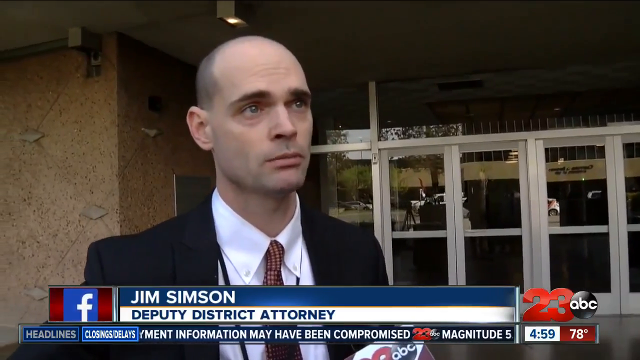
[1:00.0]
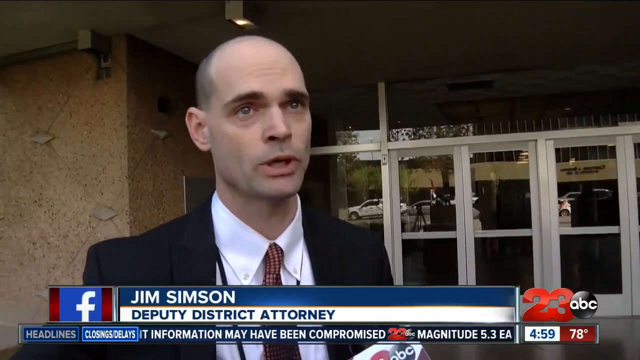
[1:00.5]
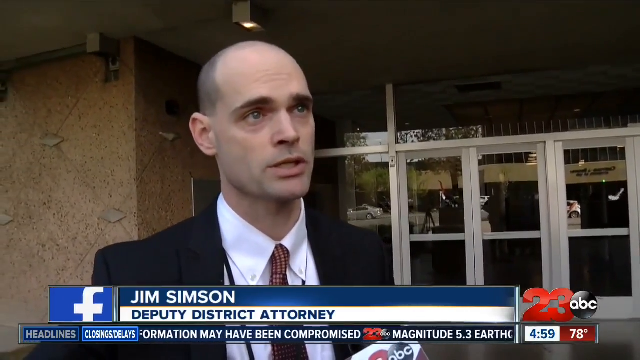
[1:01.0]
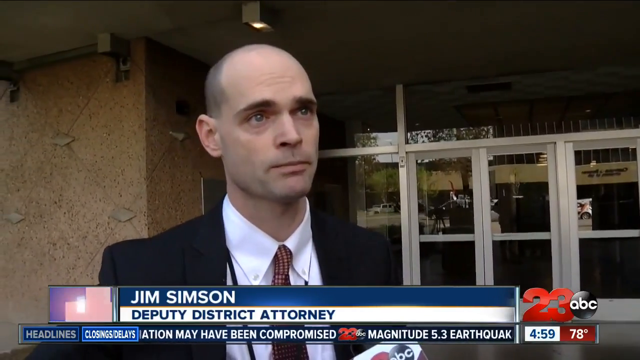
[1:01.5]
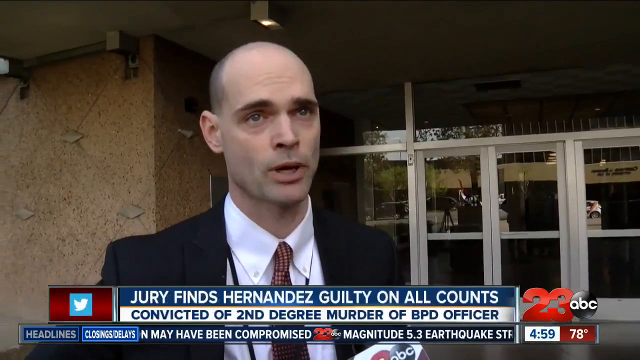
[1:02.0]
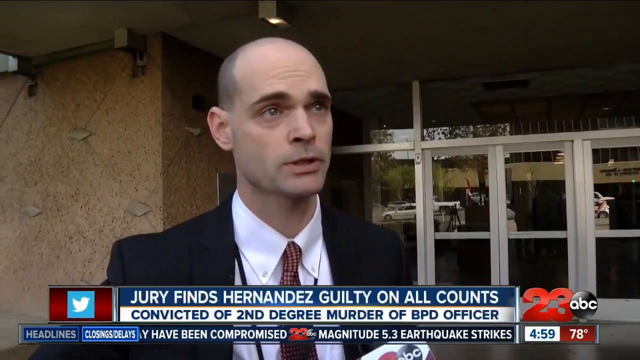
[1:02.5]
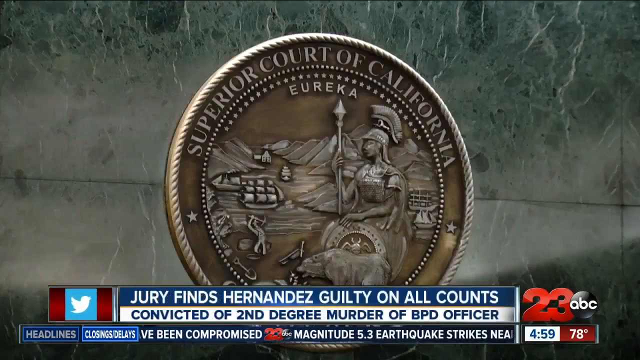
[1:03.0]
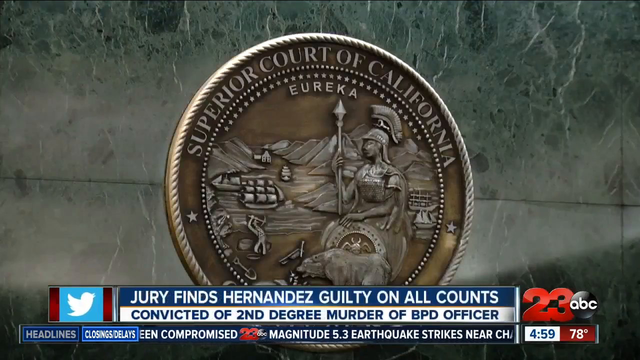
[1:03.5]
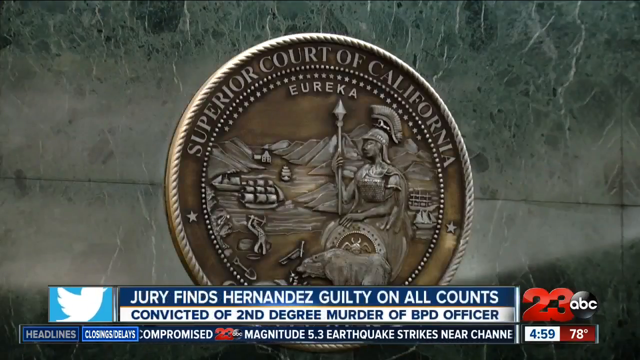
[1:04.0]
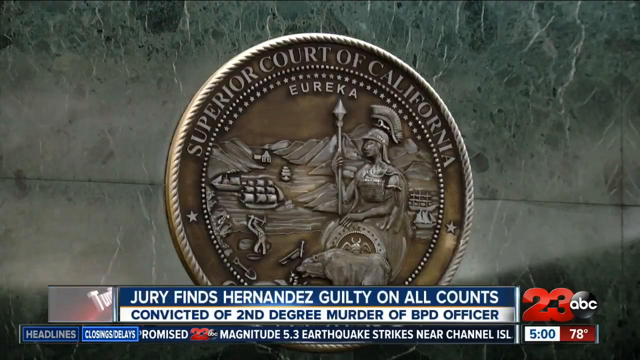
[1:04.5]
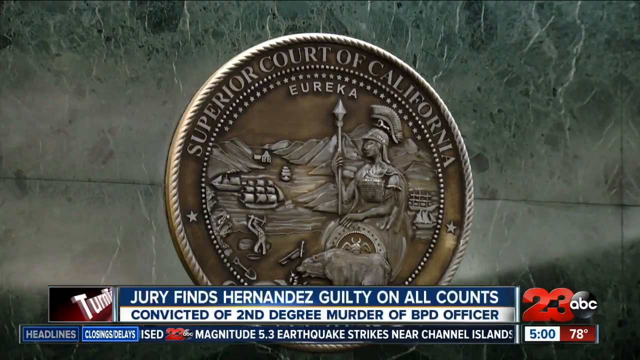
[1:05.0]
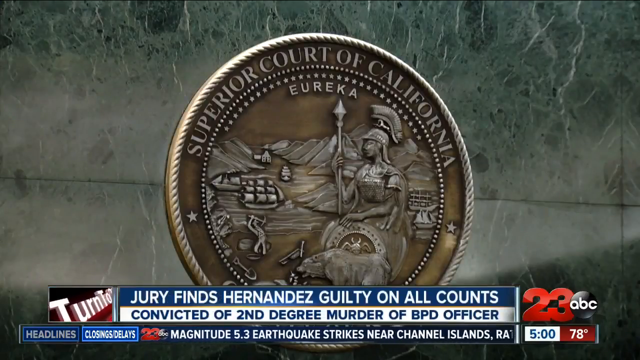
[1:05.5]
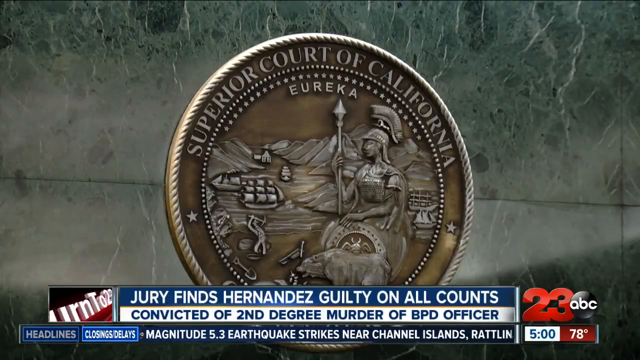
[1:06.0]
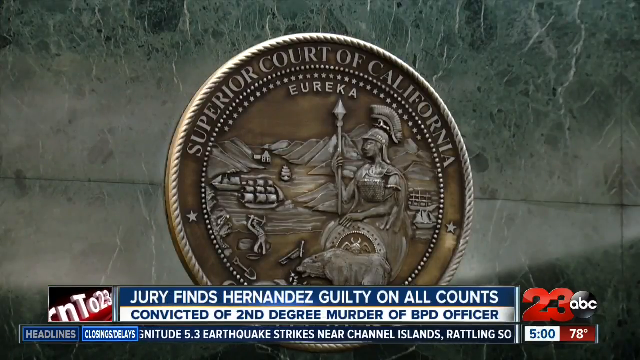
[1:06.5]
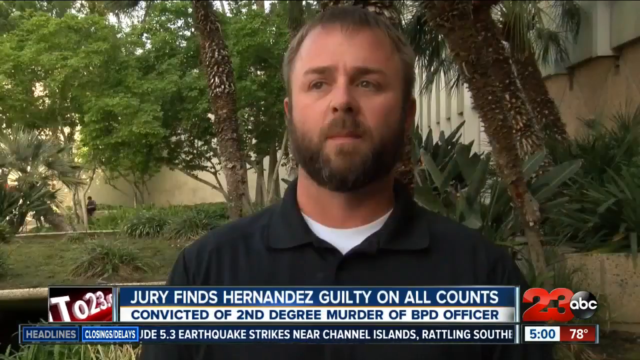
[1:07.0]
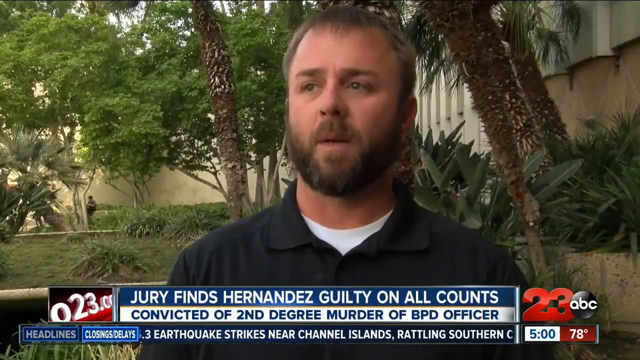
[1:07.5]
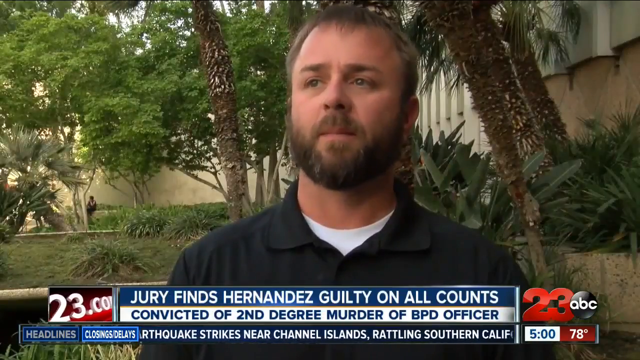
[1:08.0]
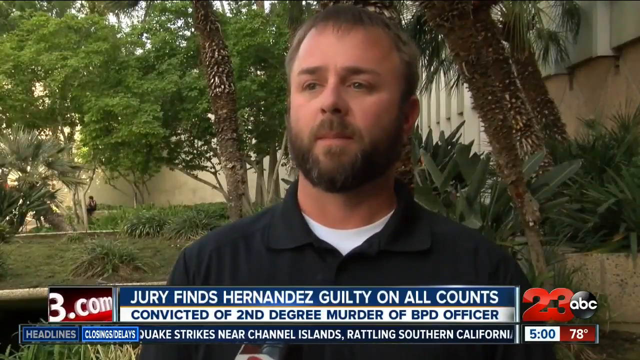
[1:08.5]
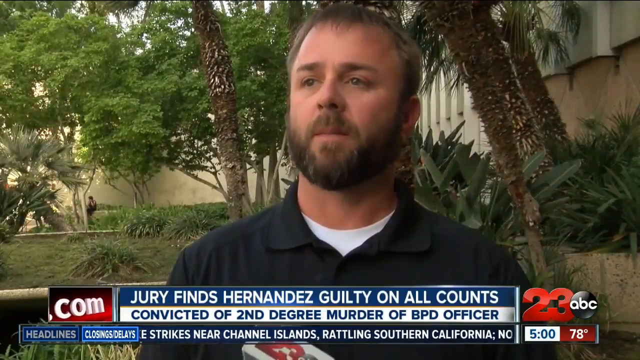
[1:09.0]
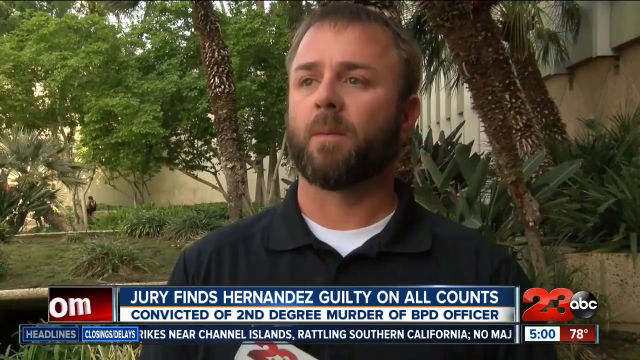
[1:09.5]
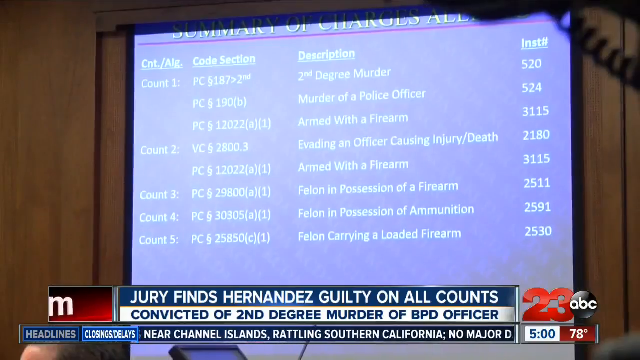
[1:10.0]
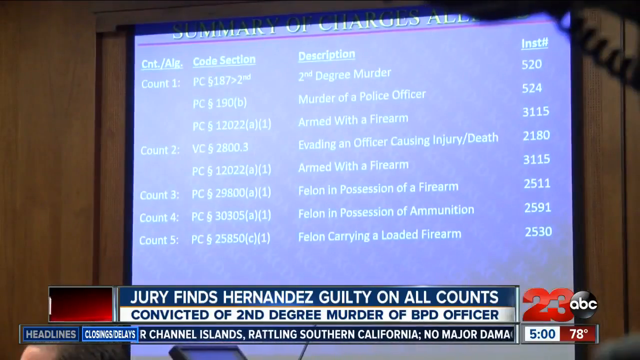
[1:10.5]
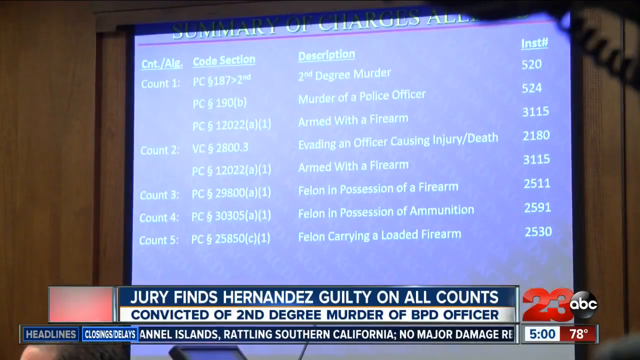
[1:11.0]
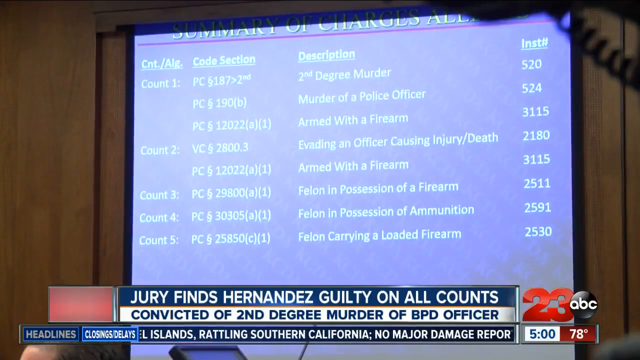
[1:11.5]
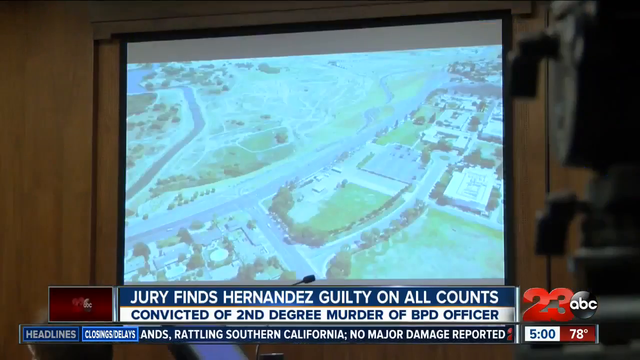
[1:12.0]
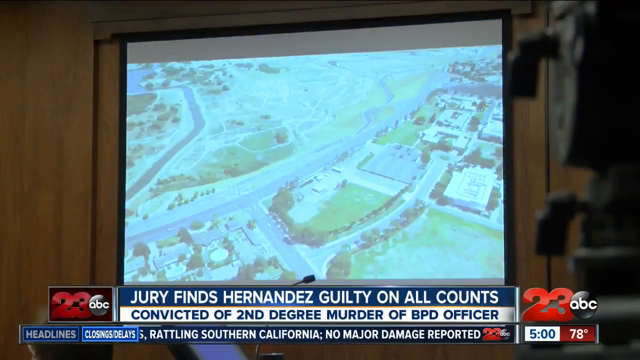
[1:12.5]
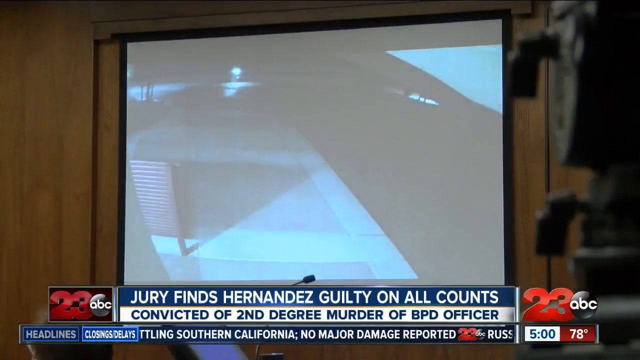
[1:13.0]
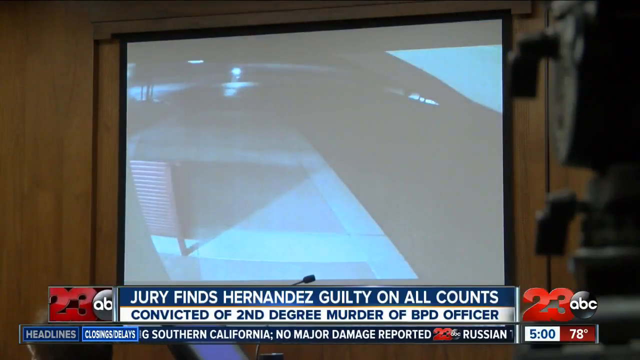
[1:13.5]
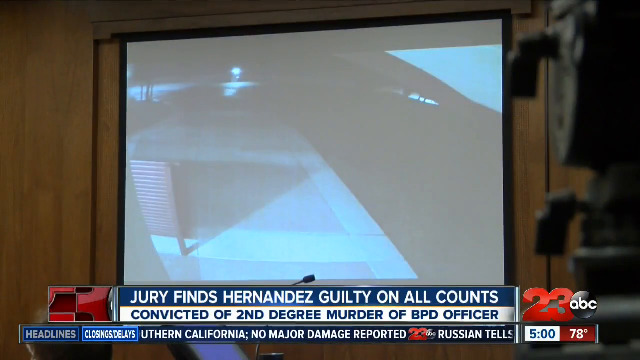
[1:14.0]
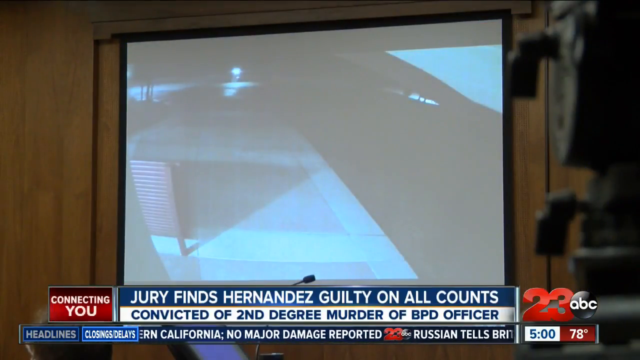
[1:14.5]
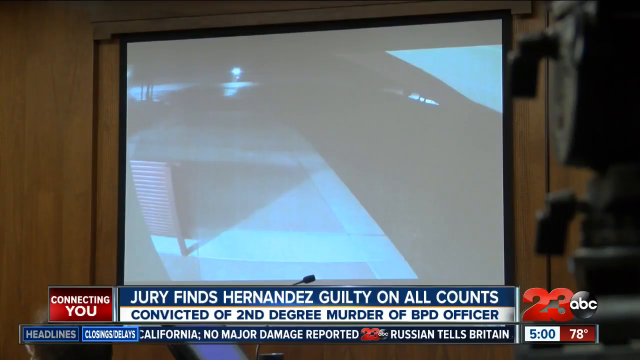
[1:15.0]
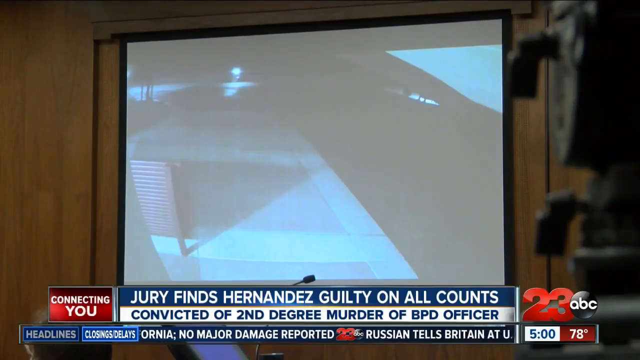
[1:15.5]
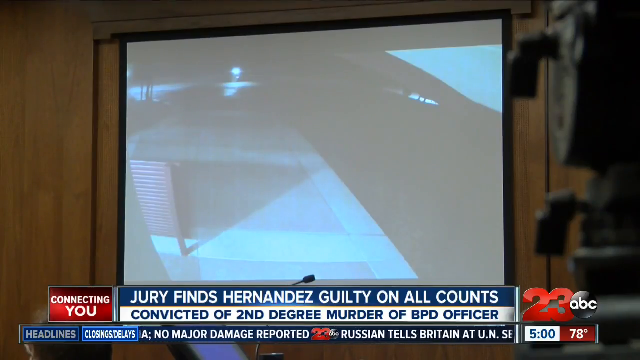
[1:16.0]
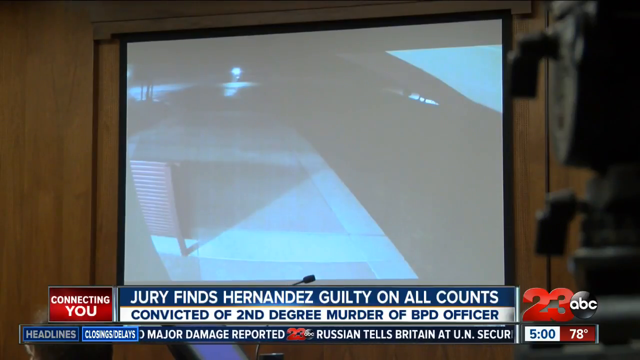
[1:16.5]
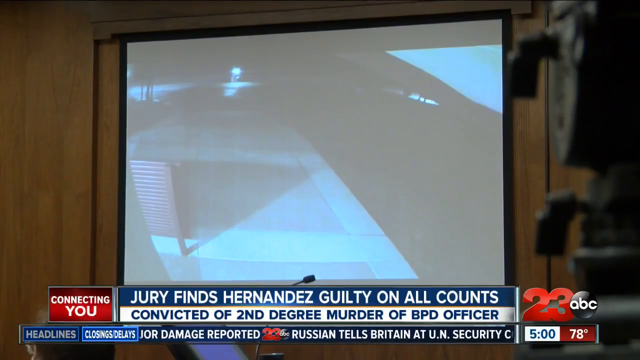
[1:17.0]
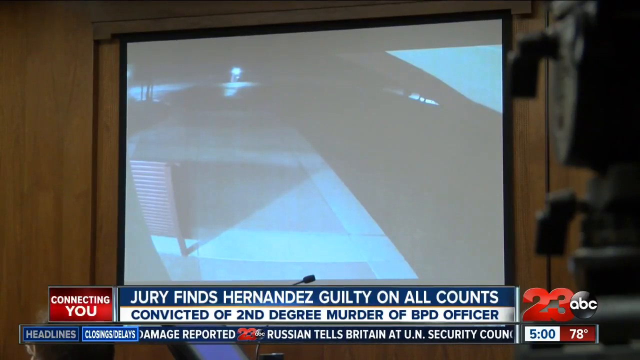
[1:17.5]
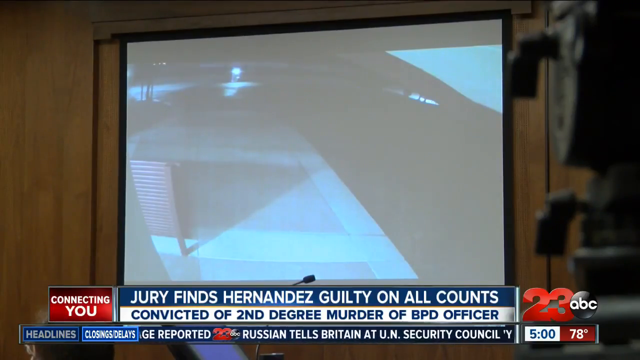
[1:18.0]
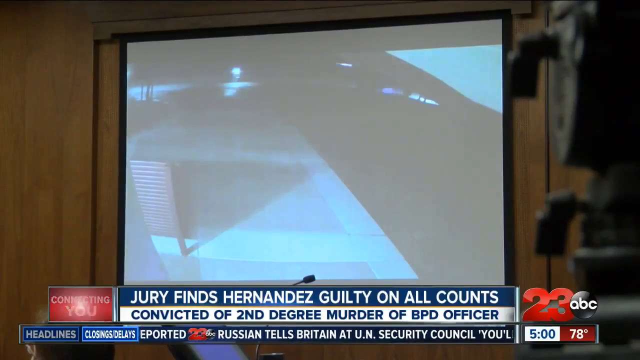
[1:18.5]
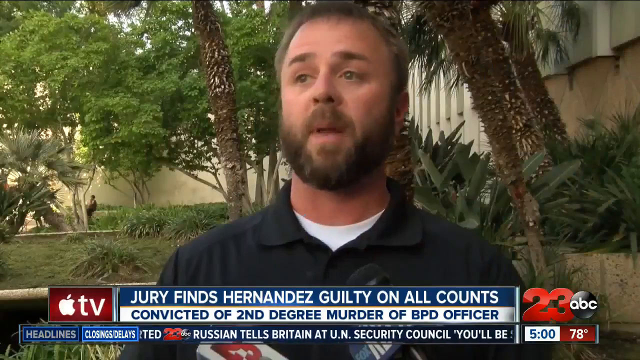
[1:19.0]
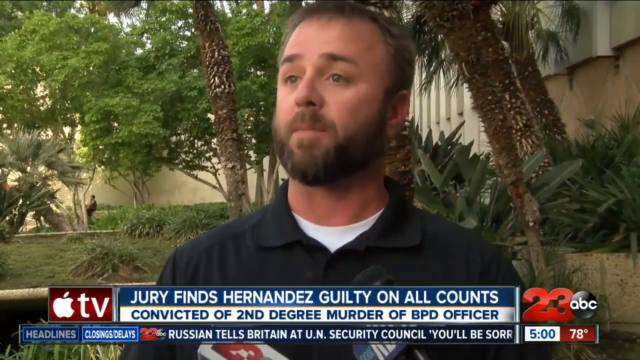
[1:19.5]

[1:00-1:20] Under the headline "Jury finds Hernandez guilty on all counts," the short interview with deputy district attorney Jim Simpson wraps up. A shot of the Superior Court of California follows, then a man talks briefly. A list summarizing the charges against Hernandez appears: second-degree murder, evading, armed with a gun, felon with a gun, and felon with ammunition. Behind Hernandez at the trial are the Hello Kitty item, the 7 Up, the orange, and family pictures.